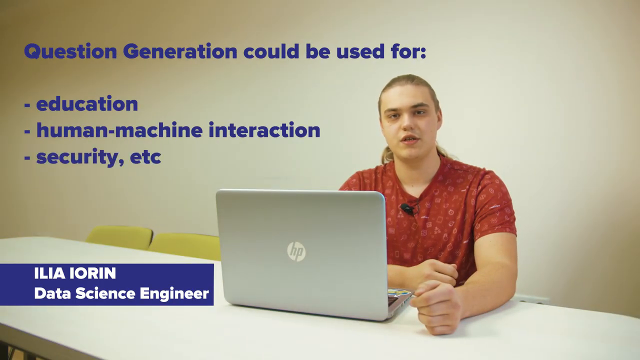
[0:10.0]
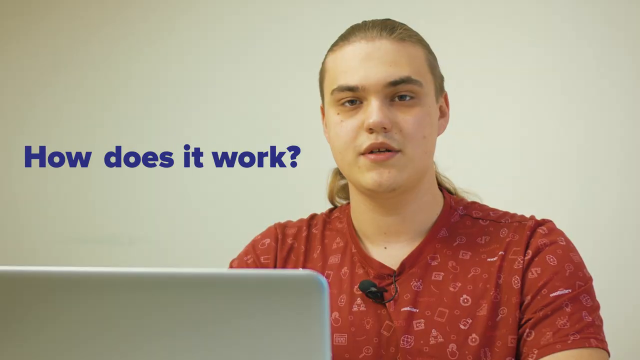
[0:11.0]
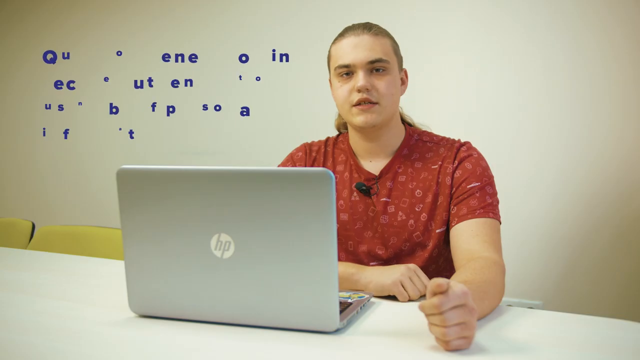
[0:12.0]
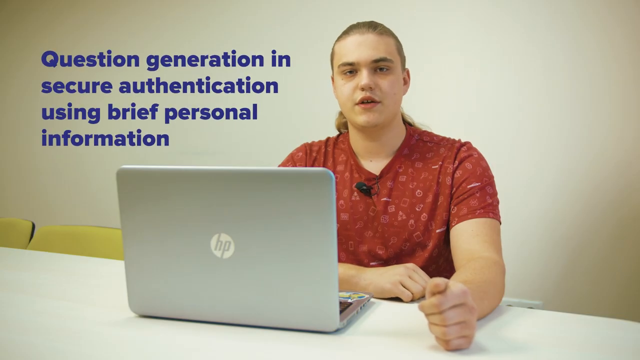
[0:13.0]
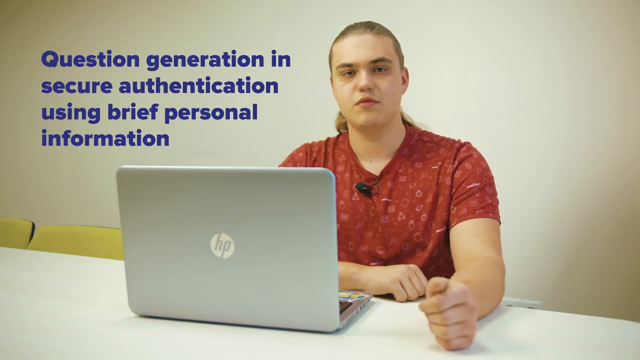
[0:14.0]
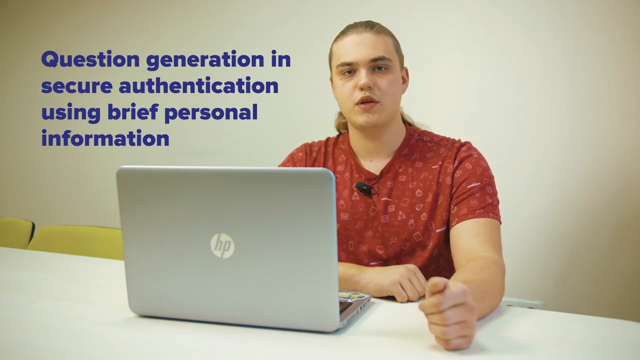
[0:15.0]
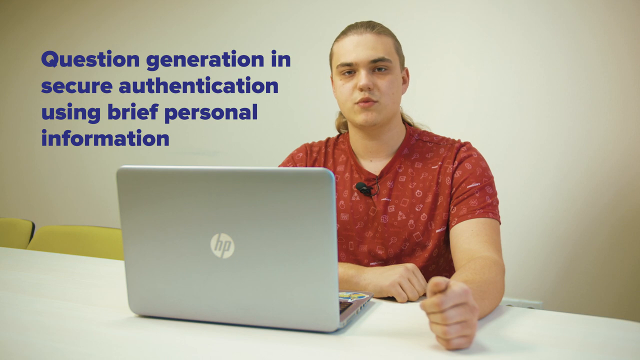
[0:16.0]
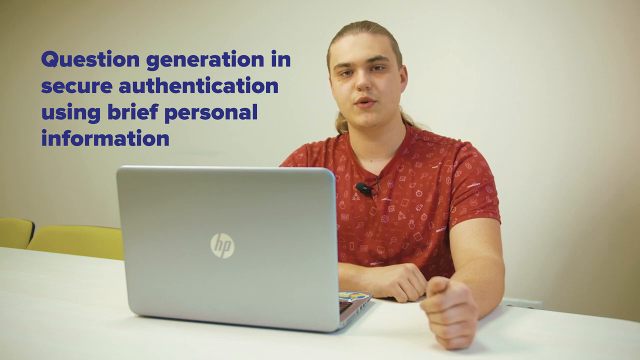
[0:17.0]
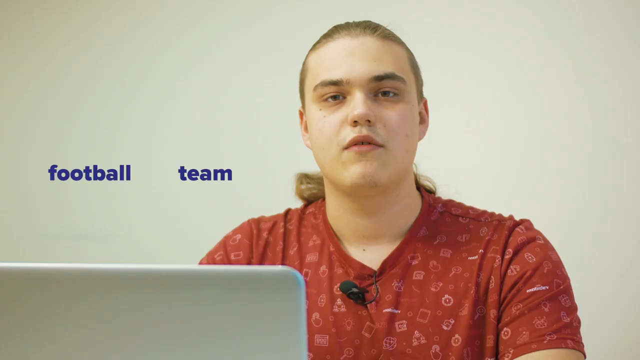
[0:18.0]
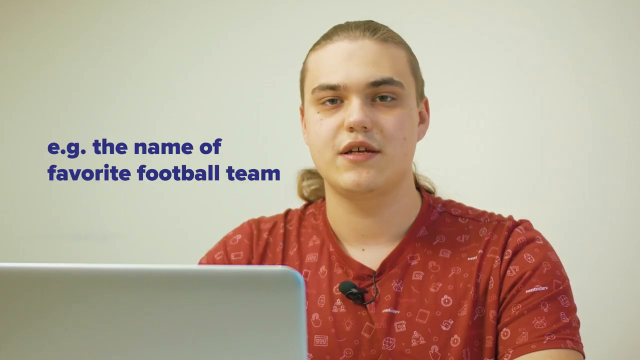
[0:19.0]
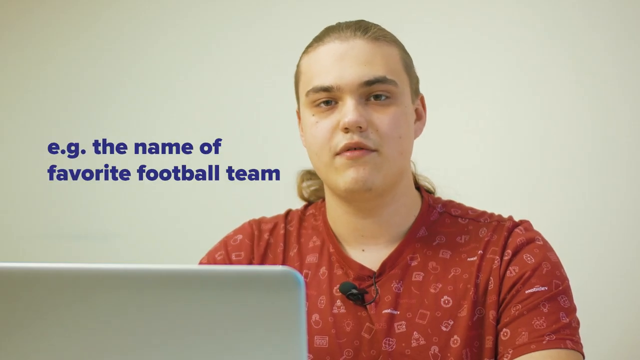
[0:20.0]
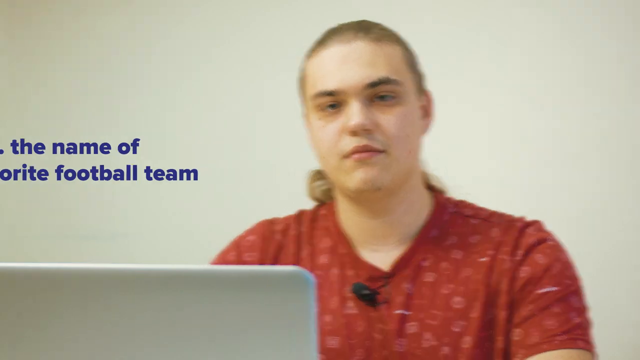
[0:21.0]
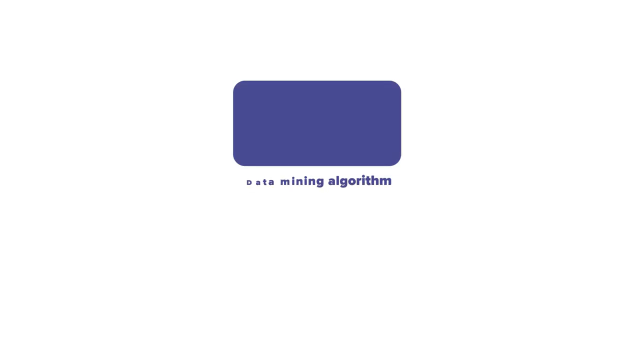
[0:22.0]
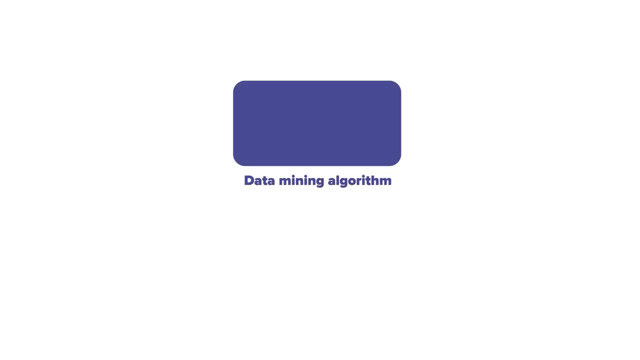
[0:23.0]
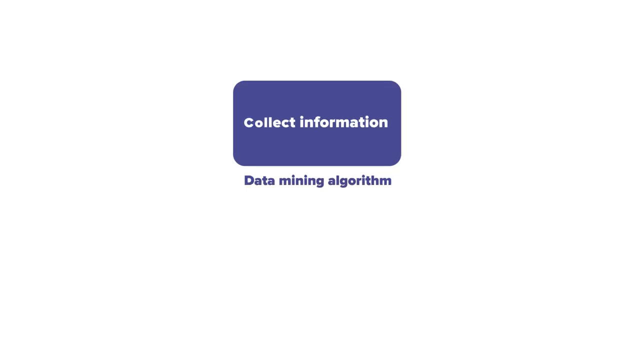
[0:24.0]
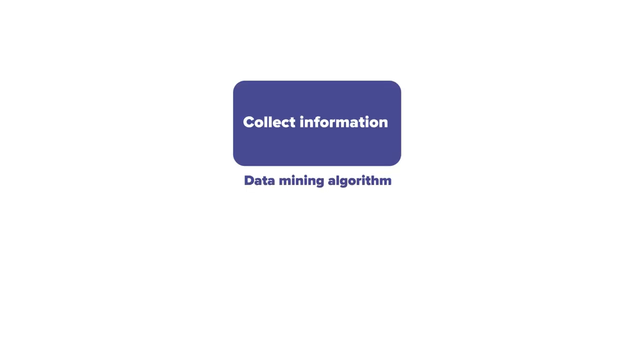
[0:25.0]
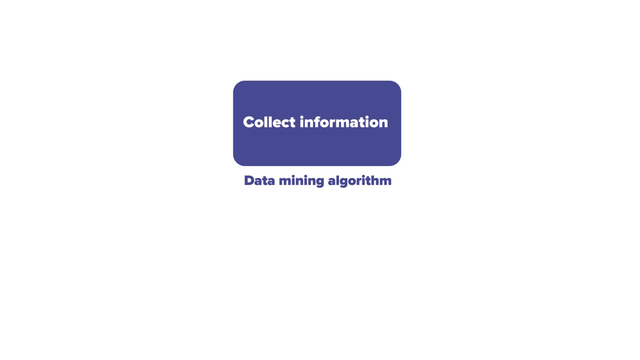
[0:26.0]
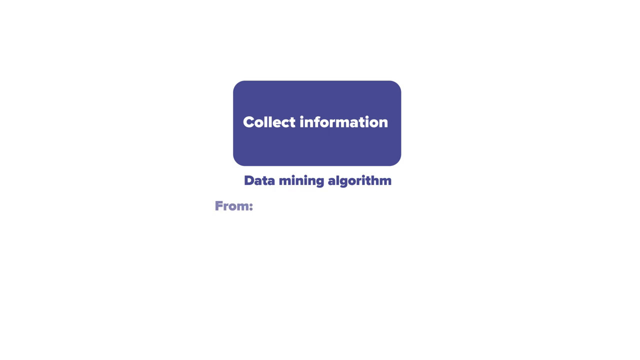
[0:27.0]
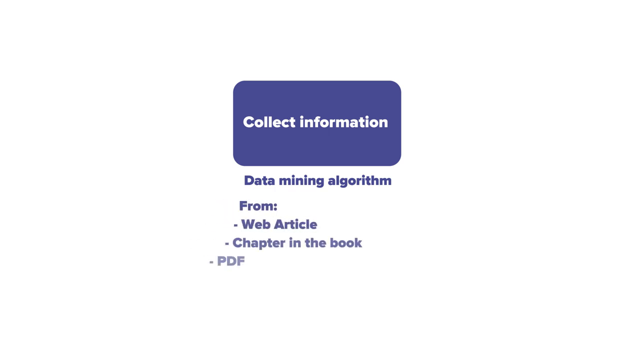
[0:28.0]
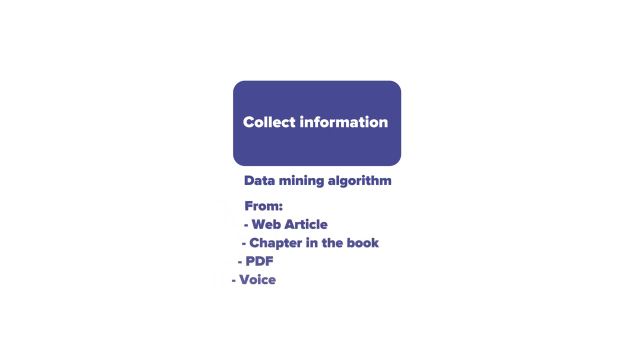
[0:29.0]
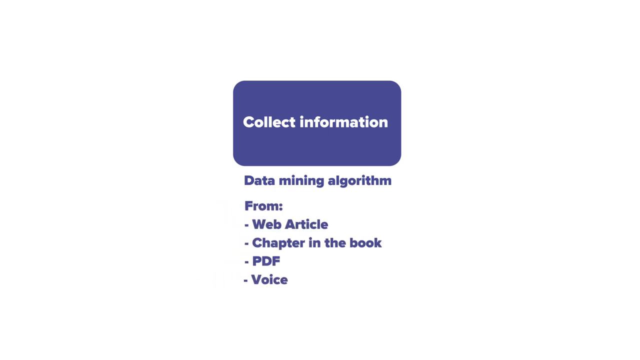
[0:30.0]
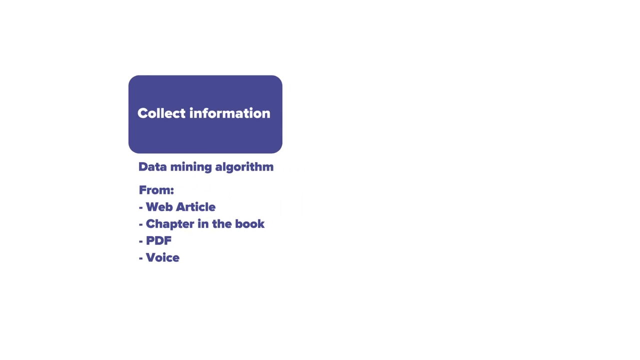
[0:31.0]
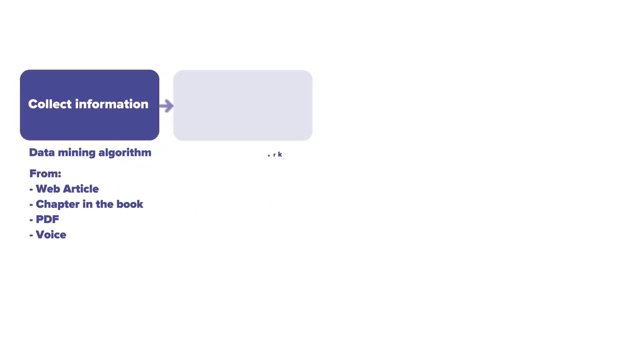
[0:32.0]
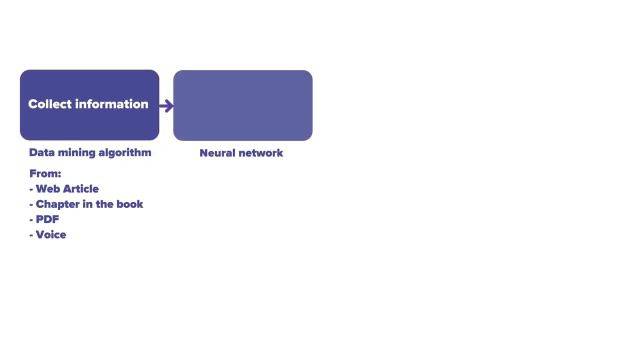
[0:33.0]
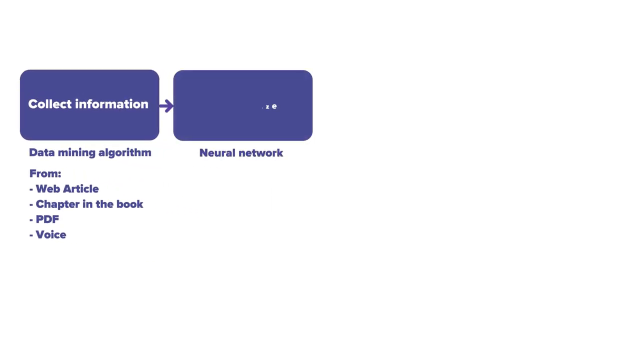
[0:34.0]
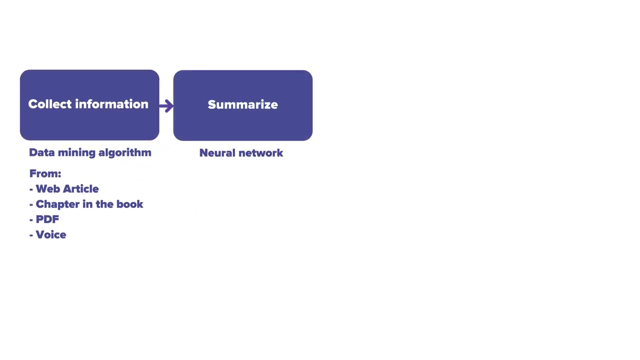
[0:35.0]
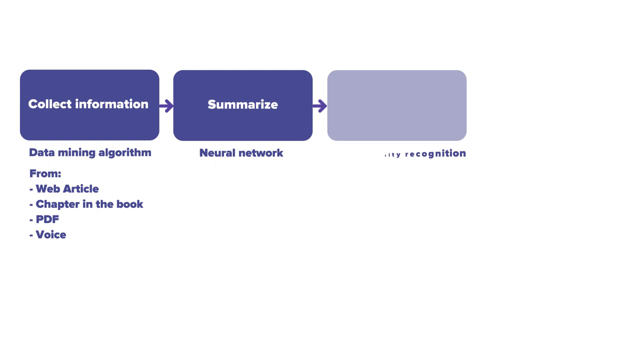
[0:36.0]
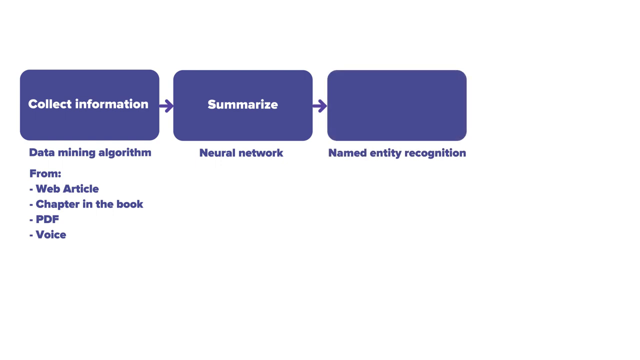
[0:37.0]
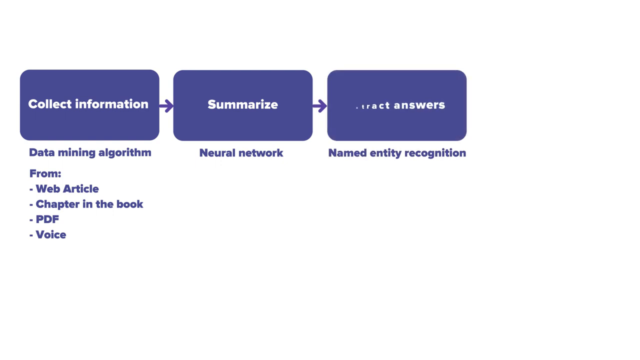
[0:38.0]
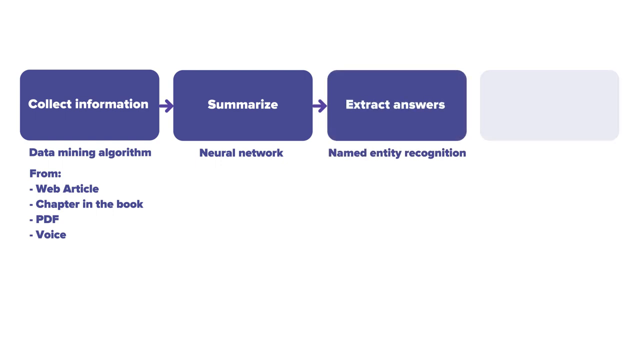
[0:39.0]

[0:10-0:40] The data science engineer appears, with their name and profession on a blue screen. Uses for question generation AI and deep learning are shown, such as education, human-machine interactions and security. Blue text appears on the left side of the screen, presenting it as a secure authentication tool. An HP laptop is in front of the engineer, yellow seats are in the background, and the wall behind them is light. A horizontal sequence then shows the steps: information is collected from web articles, chapters in a book, PDFs and voice, passed to a neural network, summarized, and answers are extracted based on the collected information.